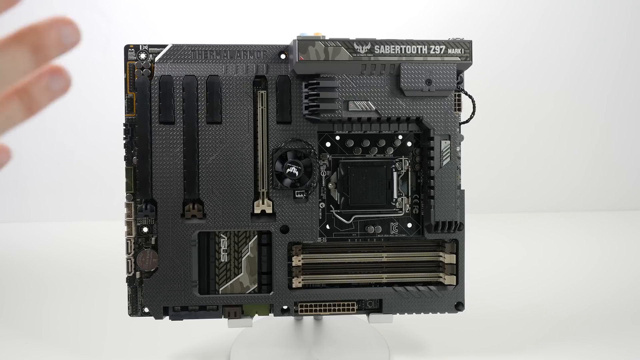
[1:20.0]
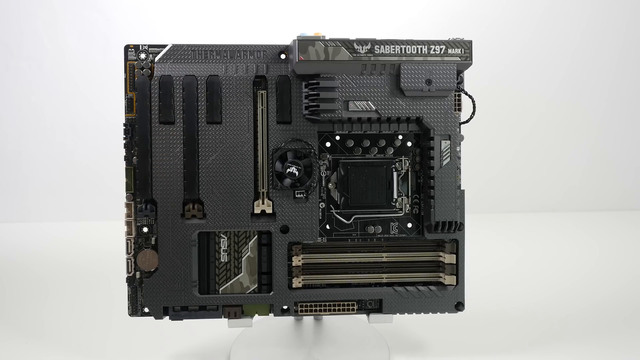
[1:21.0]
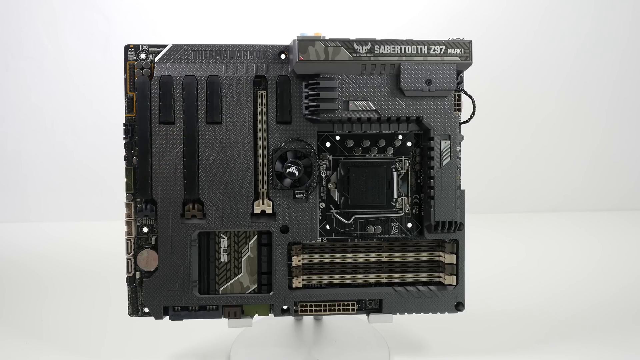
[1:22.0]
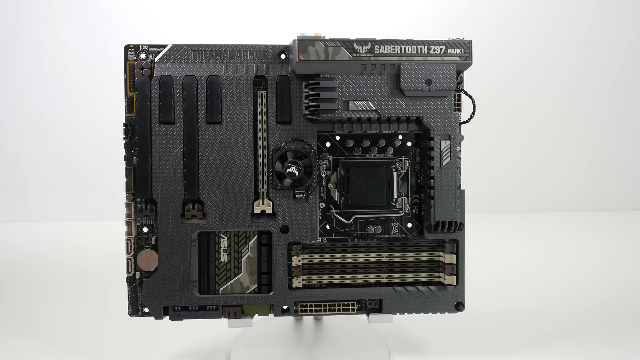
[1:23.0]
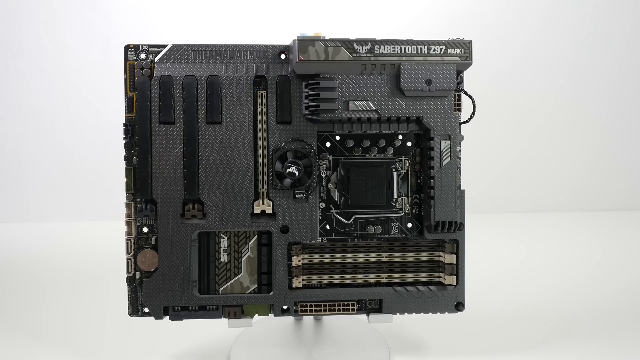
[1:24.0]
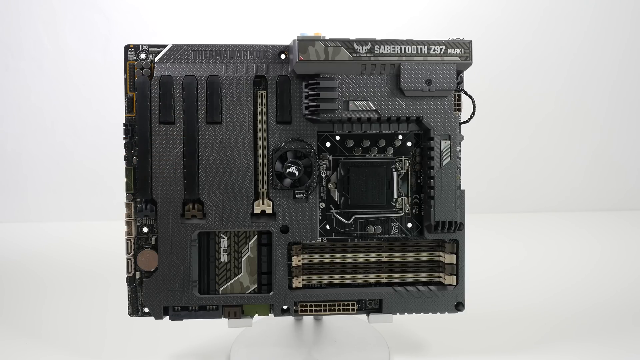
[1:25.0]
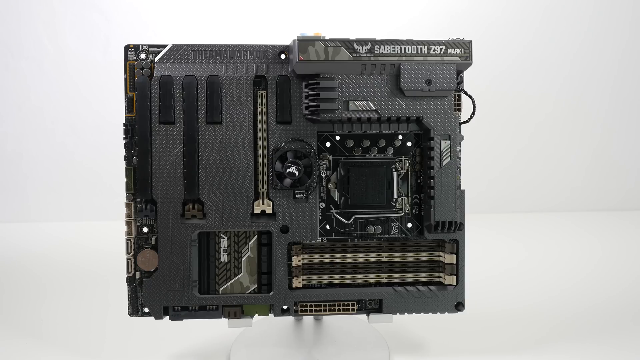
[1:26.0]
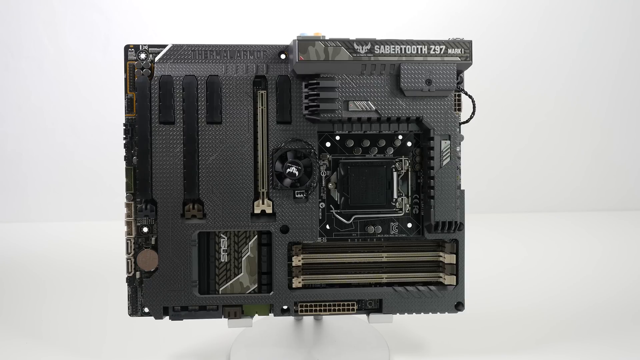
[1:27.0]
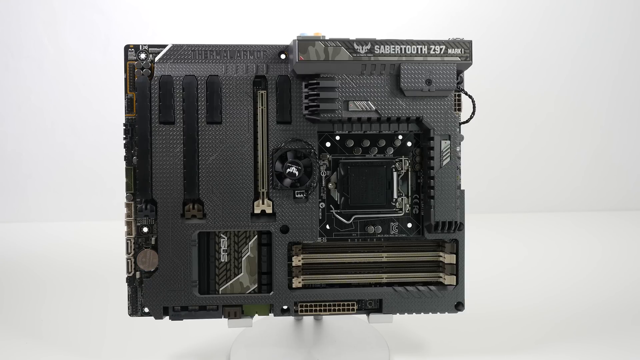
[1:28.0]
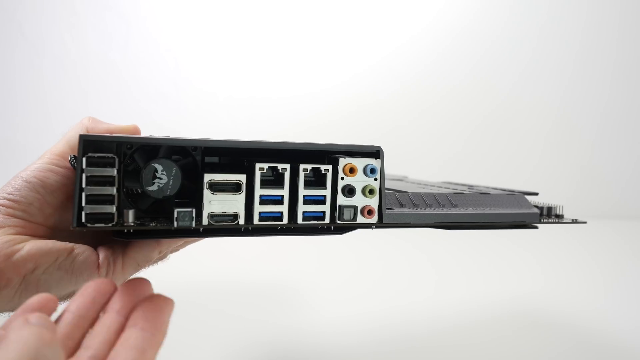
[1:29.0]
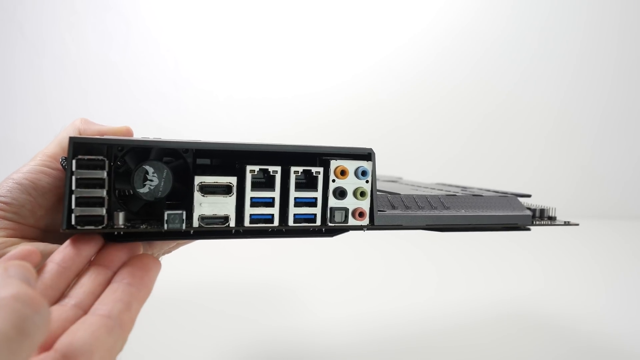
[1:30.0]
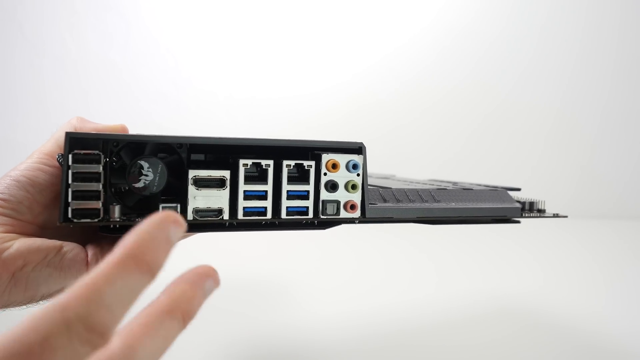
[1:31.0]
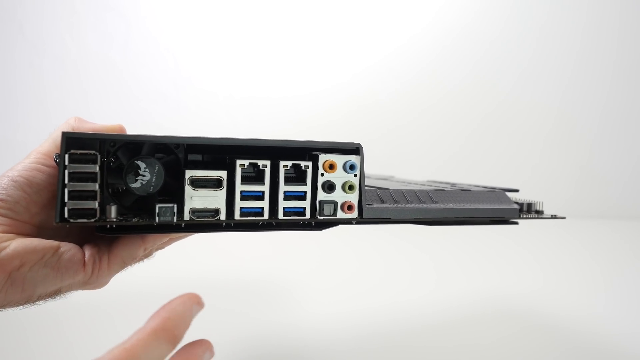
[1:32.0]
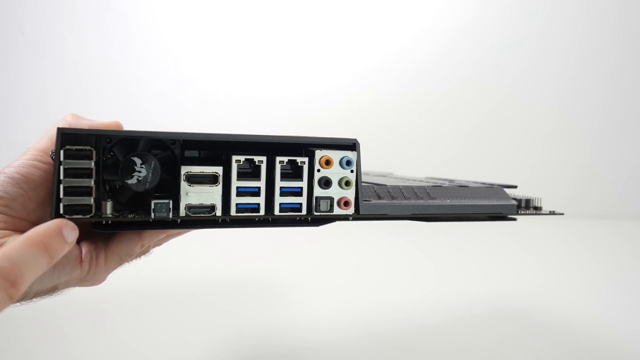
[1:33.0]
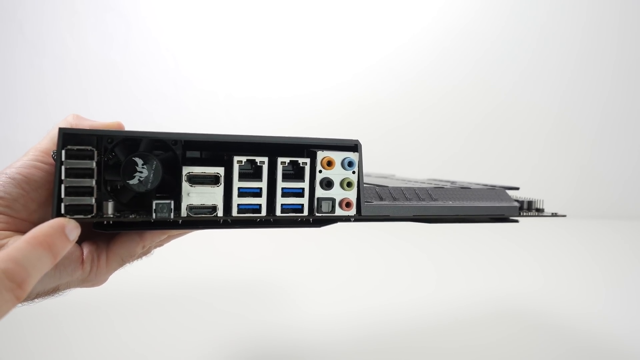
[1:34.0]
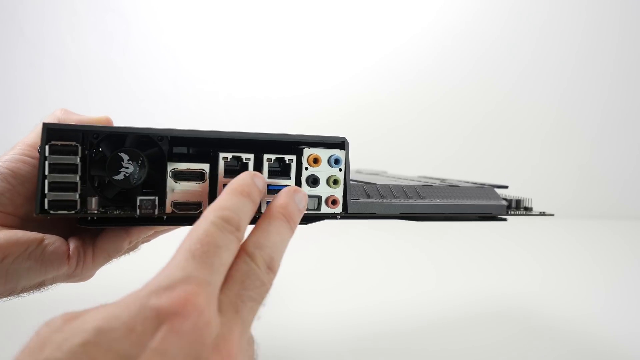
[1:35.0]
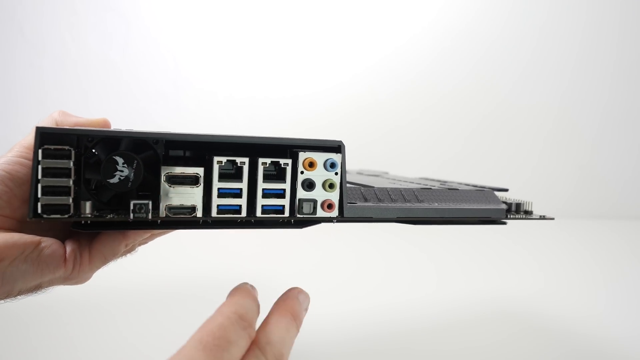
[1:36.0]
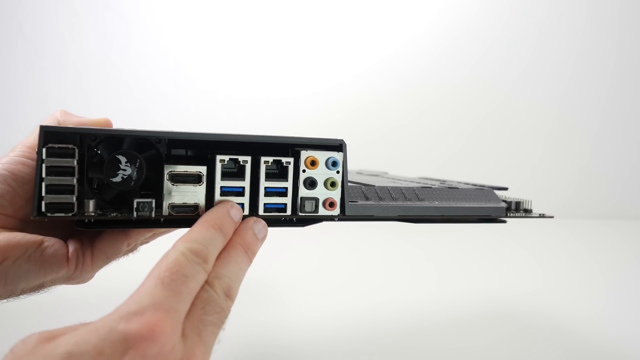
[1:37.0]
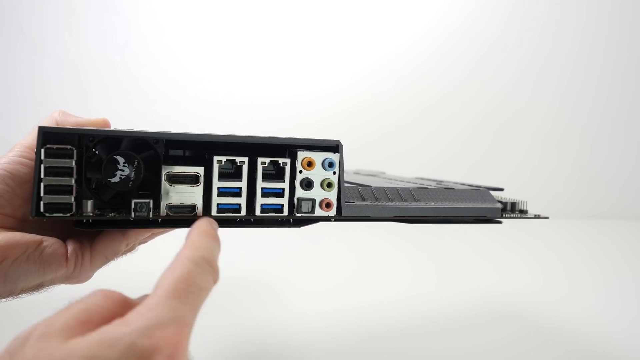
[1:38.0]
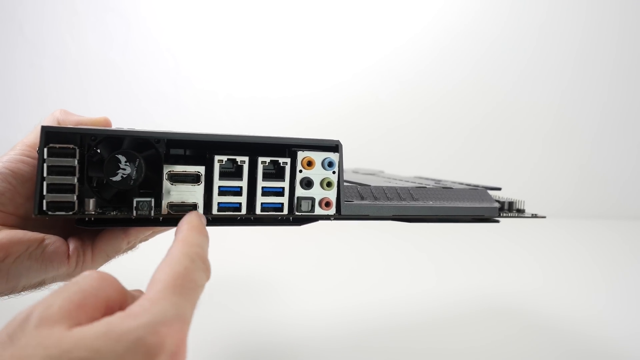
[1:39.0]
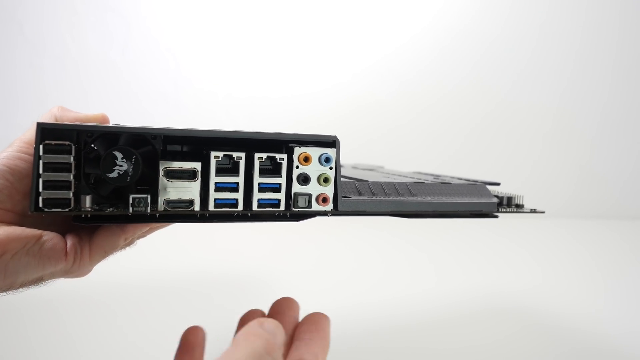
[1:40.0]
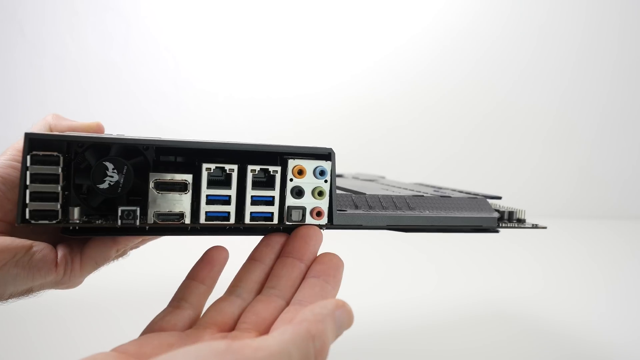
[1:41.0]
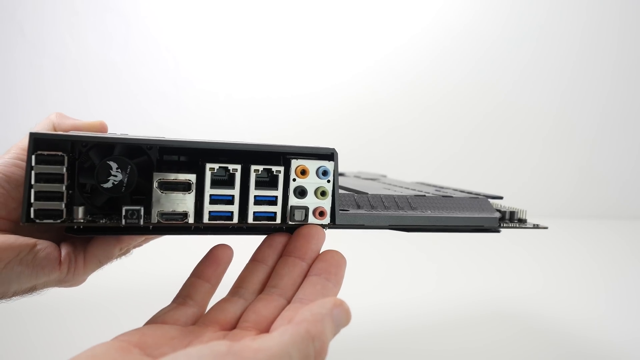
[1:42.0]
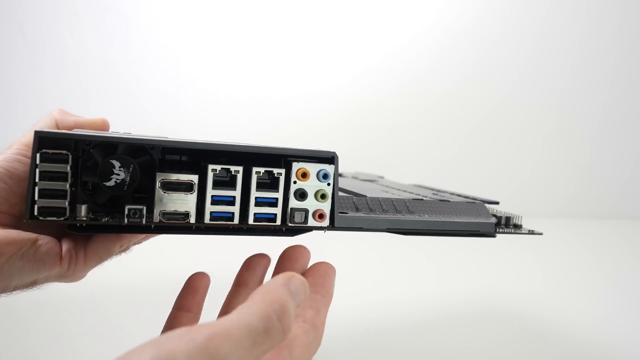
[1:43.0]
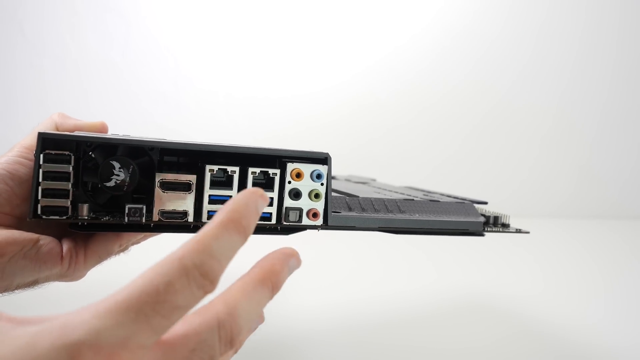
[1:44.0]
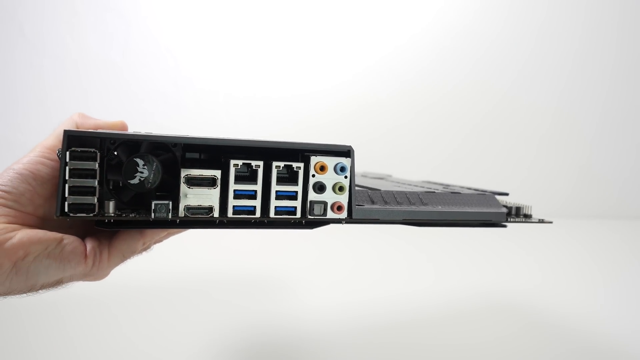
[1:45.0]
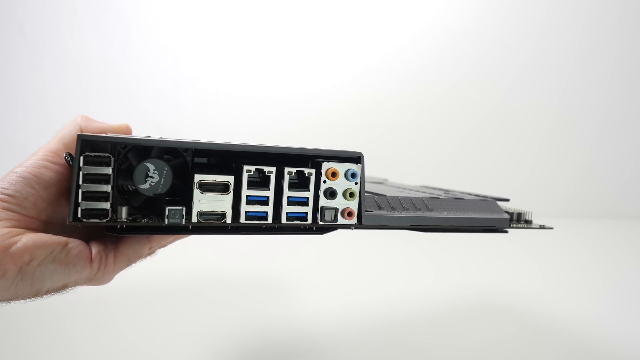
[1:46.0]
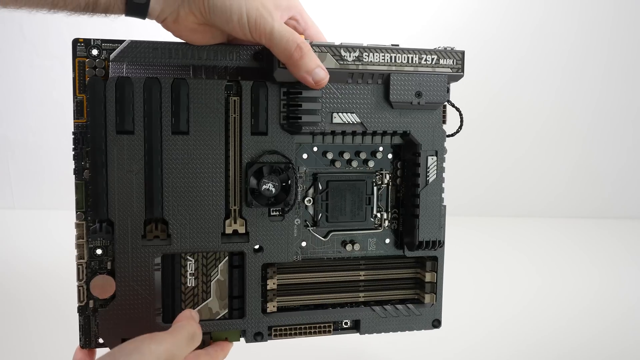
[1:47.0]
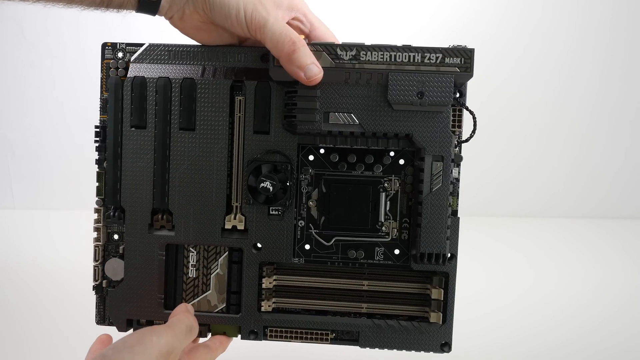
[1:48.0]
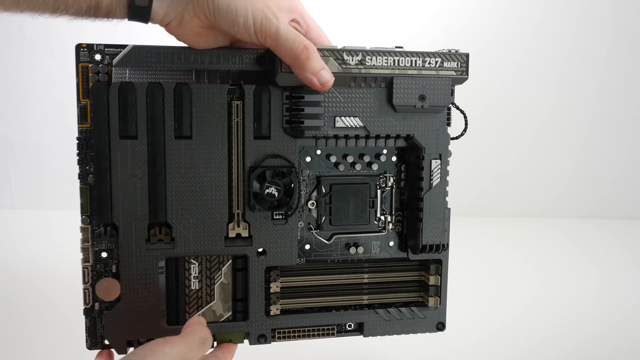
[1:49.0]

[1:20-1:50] The video creator's right hand is again in the top left-hand corner of the screen, making flicking, opening motions: showing the back of the hand, then opening the palm to extend the fingers emphatically. The angle then changes to the person holding the motherboard in their left hand, palm facing the camera, with the hand at the left border of the screen. The motherboard is now shown on its side, with multiple ports visible on the thicker left portion while the right side is thinner black plastic. The palmar side of the right hand's fingers is shown, with the fingertips visible at the bottom left-hand corner of the screen. The person points with the index finger to the four USB ports on the far left of the motherboard, then uses the index and middle fingers to point toward two columns of ports closer to the right-hand side, and gestures emphatically with all fingers. The video then changes to the person holding the motherboard in the same frontal view with their left hand, the thumb clearly visible along with a black band at the wrist, likely a watch or anti-static bracelet. The right hand points toward the bottom of the motherboard near the black and green part bearing the white ASUS logo.